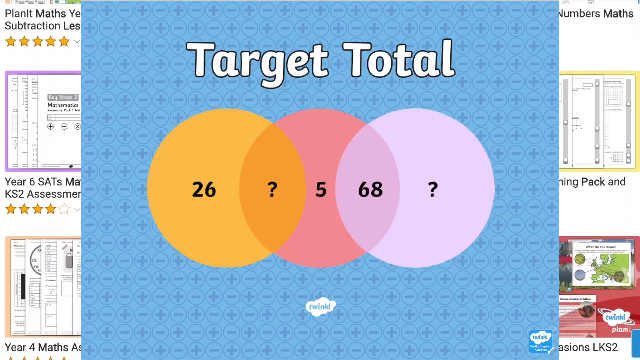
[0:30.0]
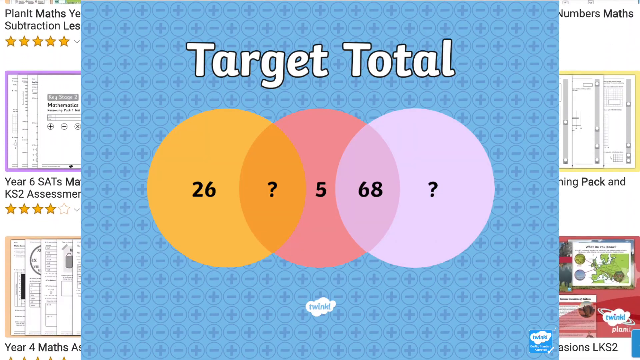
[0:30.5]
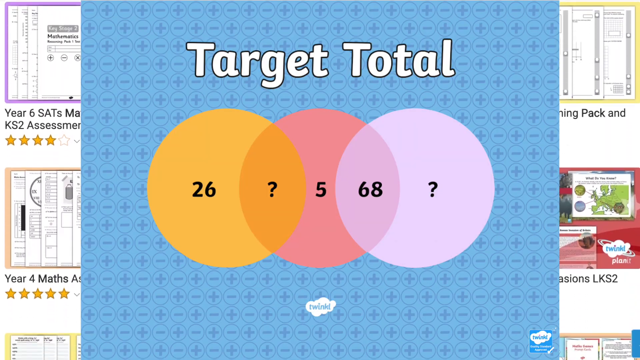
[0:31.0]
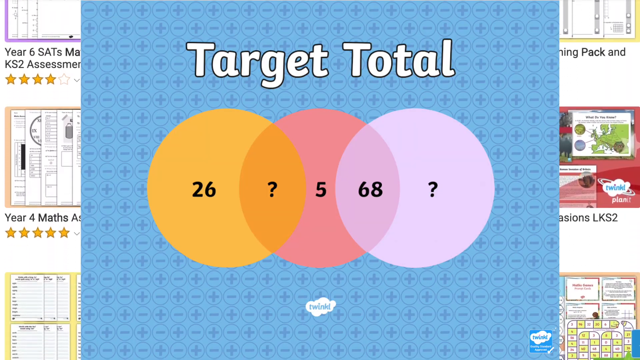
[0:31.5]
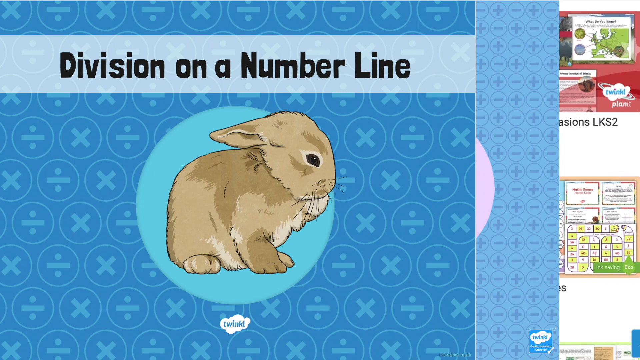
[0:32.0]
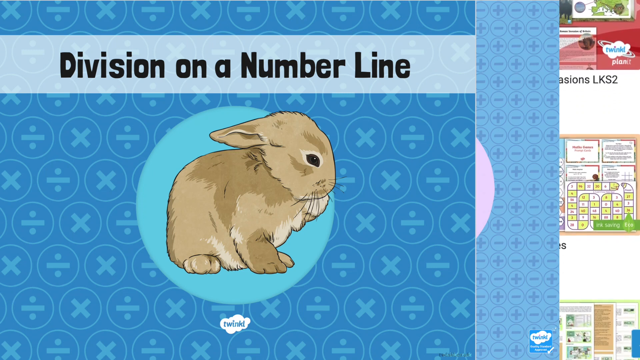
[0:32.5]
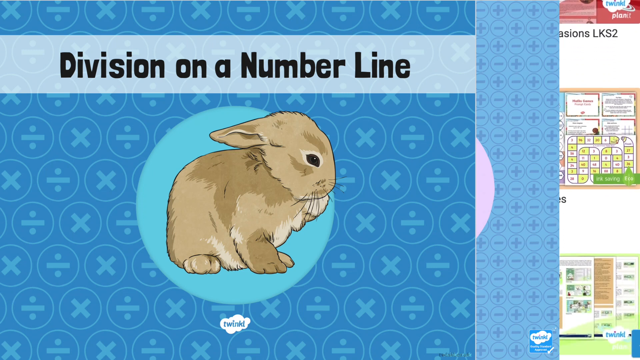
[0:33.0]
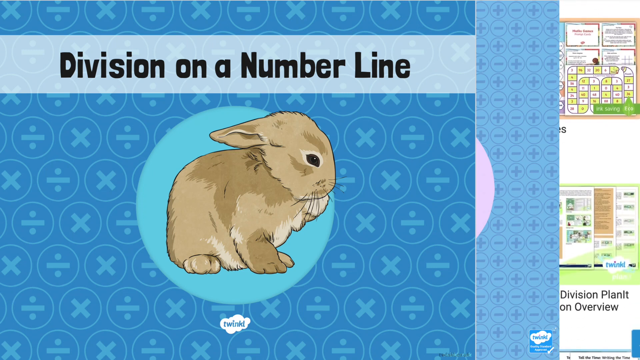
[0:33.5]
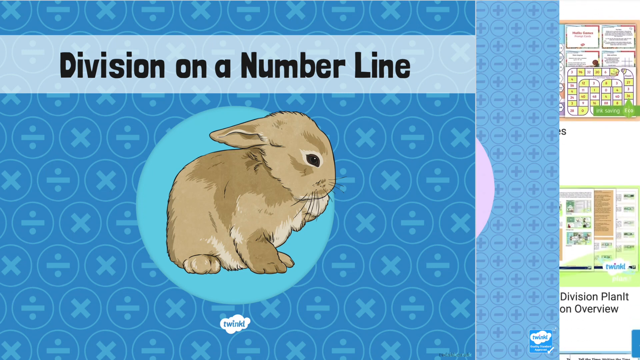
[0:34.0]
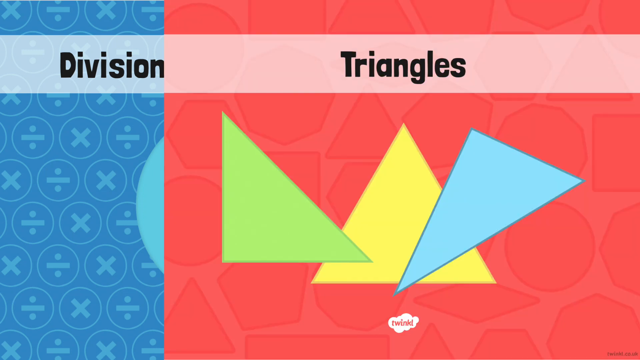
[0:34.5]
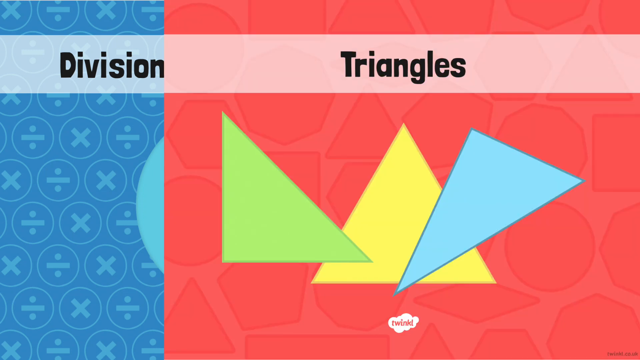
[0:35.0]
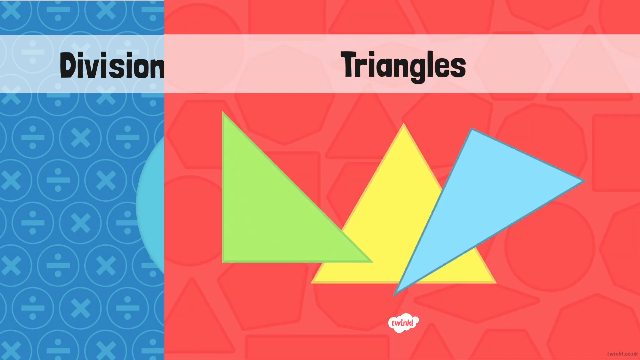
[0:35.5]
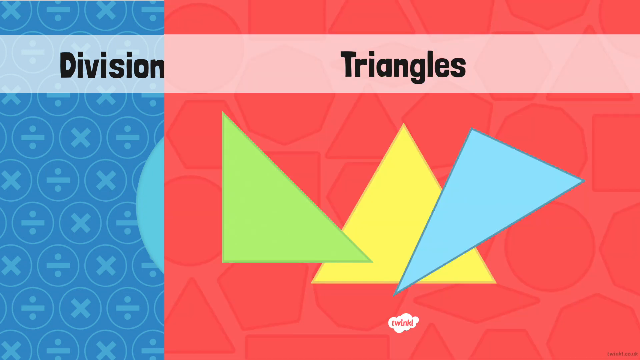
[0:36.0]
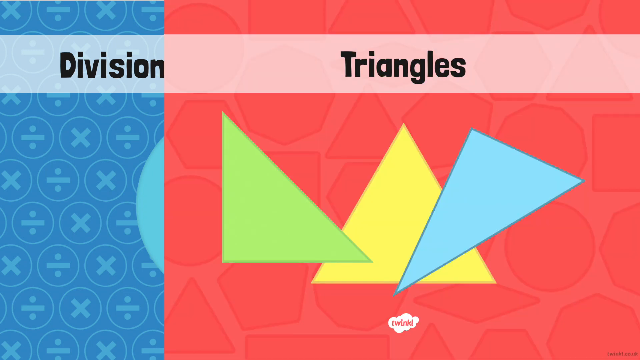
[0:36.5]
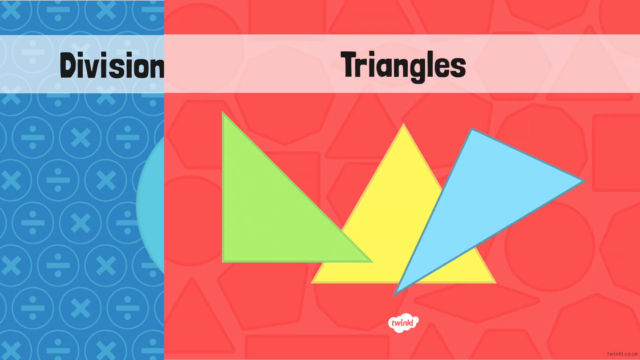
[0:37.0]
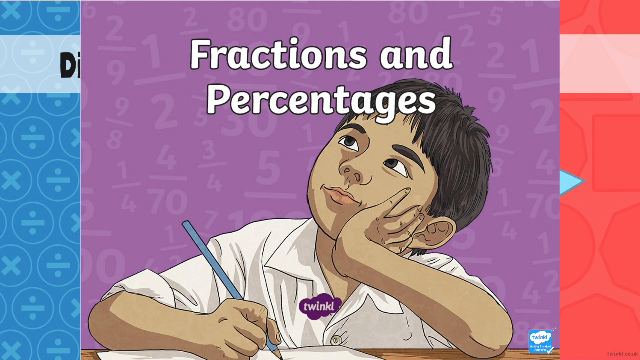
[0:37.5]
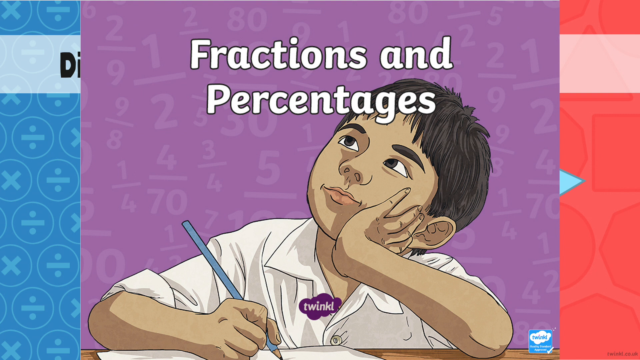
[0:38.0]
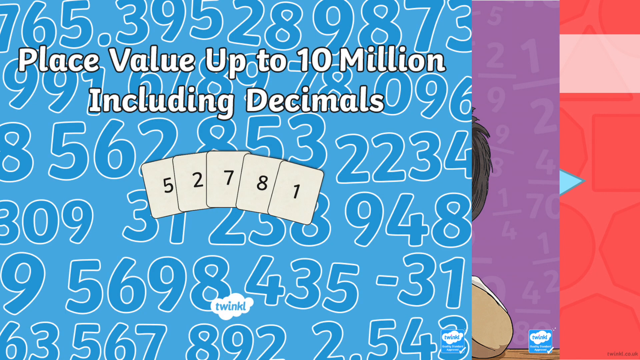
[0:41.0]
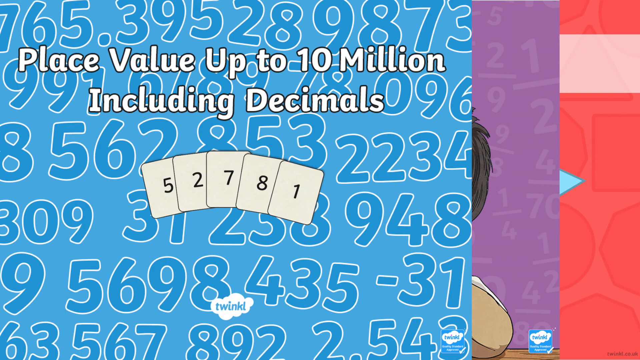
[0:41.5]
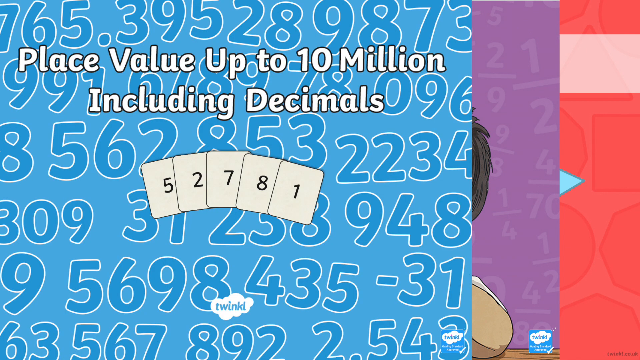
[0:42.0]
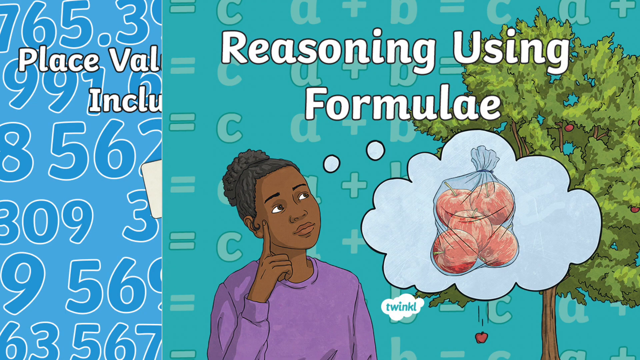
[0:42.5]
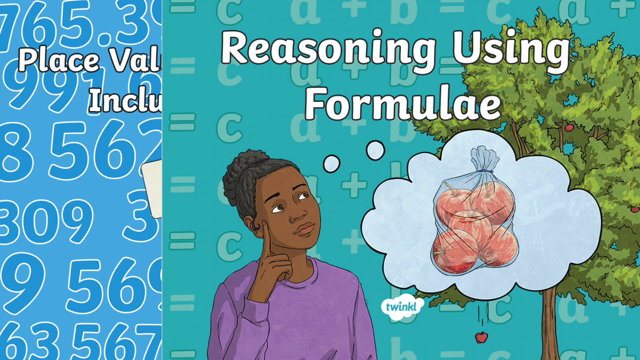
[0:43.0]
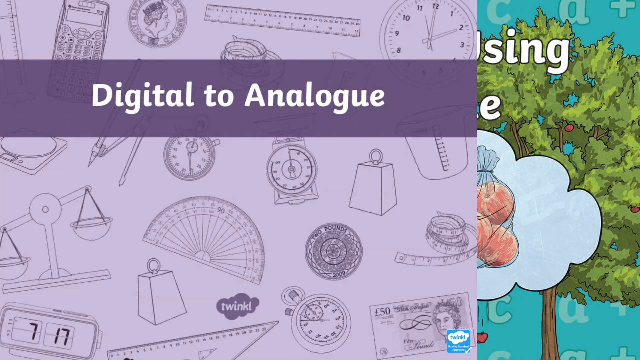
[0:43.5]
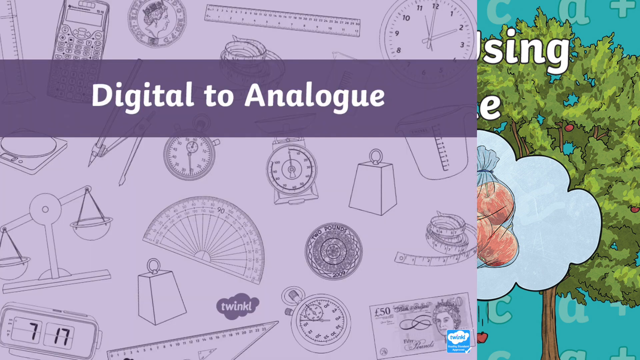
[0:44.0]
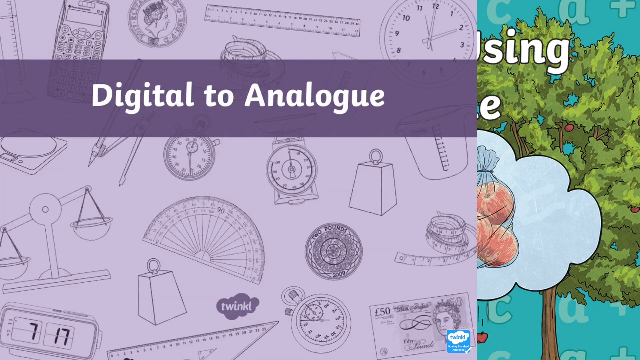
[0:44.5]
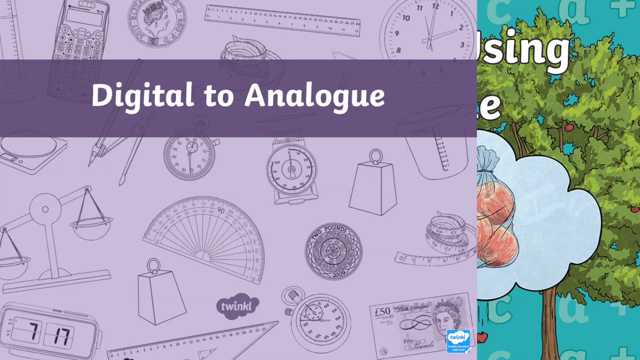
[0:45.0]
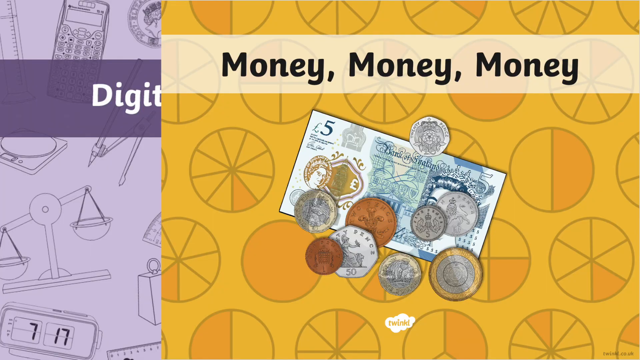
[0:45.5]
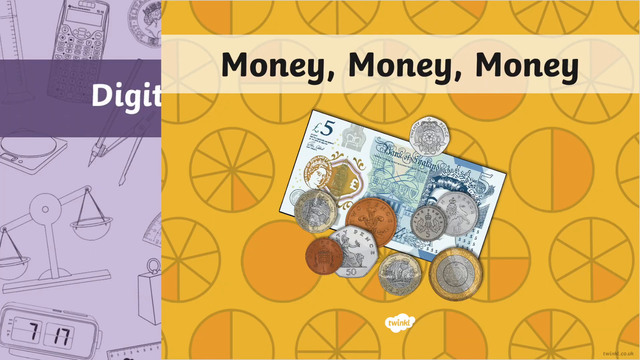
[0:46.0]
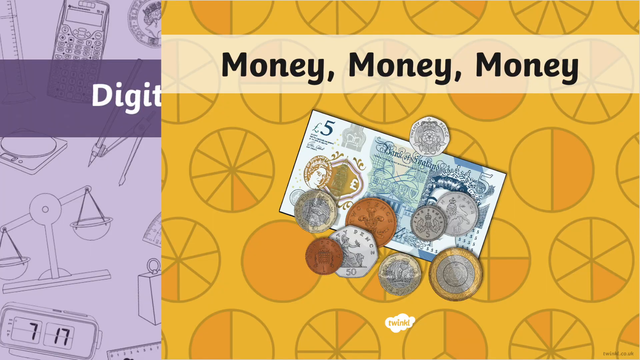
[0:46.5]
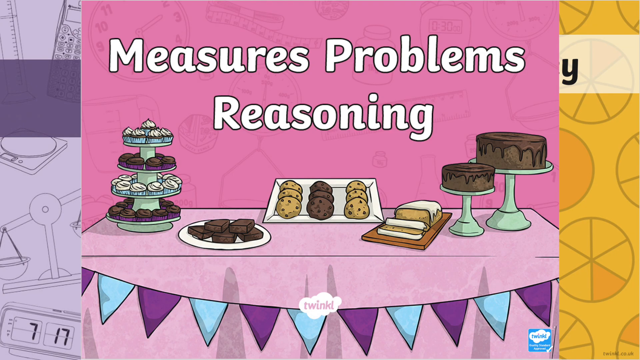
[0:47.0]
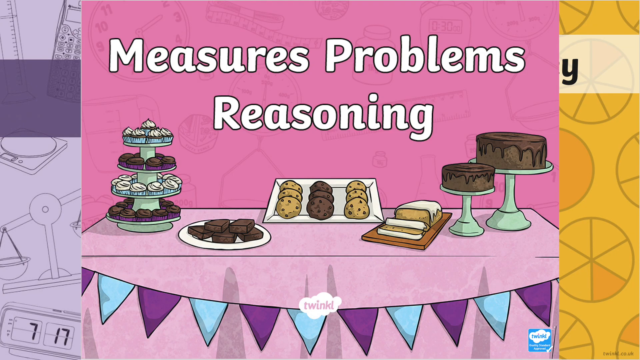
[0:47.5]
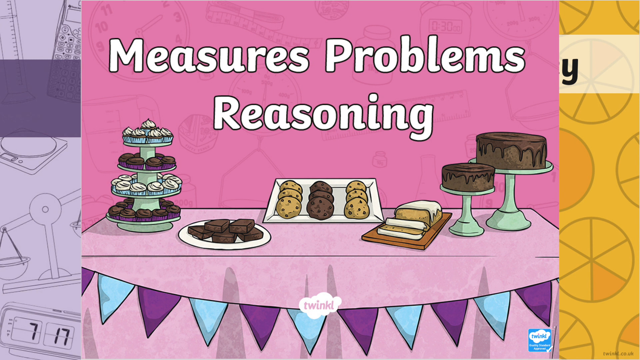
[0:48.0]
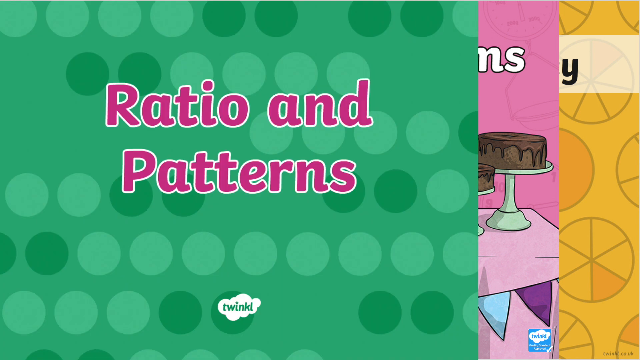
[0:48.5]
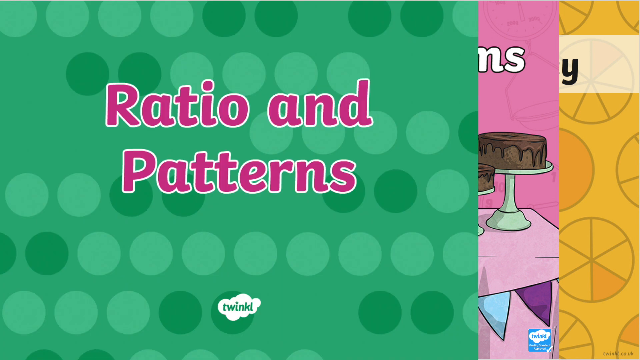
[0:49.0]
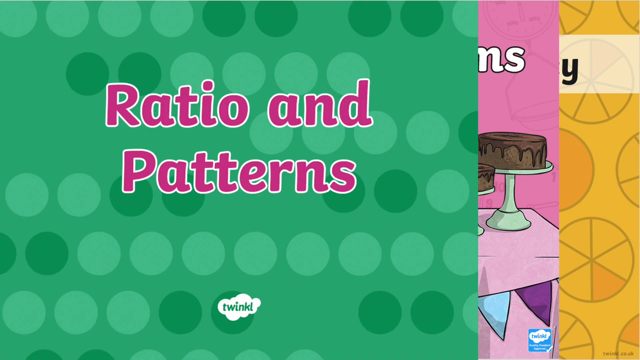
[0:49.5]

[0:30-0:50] On a blue background are topics including division, yellow triangles, functions and percentages, place value, reasoning, money, measuring problems, and ratio and patterns, showing the different things Twinkle has to offer. Target tools appear on a blue background, with an orange circle containing 20 and 26; in the middle of a pink and orange circle is a question mark, and inside the circle there are a 5, a 16, an 8 and a question mark. There is also division on a number line with a rabbit on a blue background, along with division and multiplication, and three triangles: green, yellow and blue.